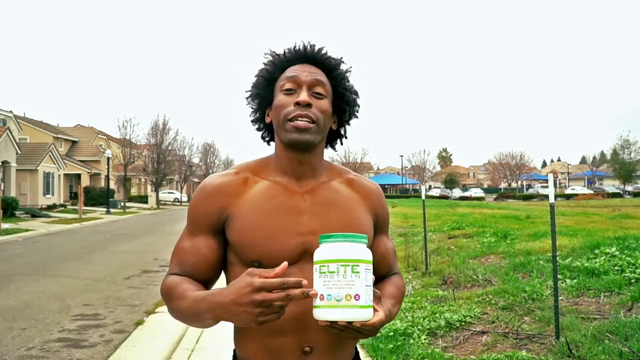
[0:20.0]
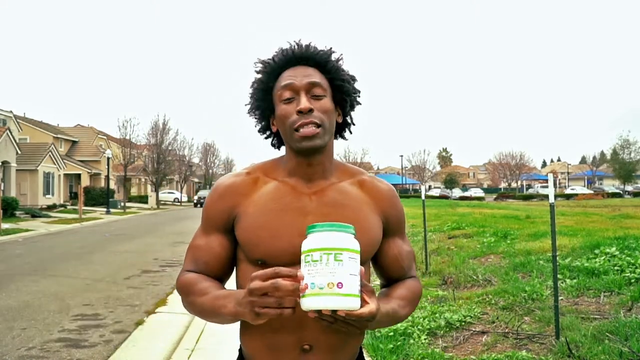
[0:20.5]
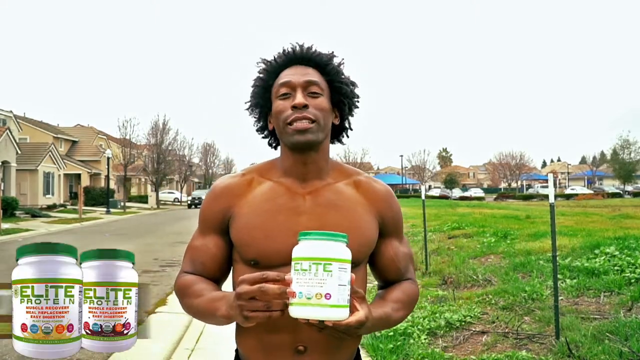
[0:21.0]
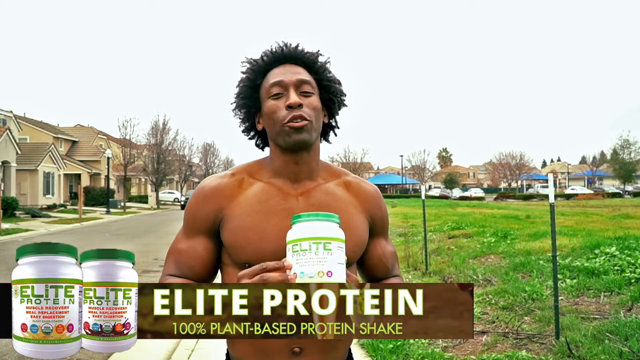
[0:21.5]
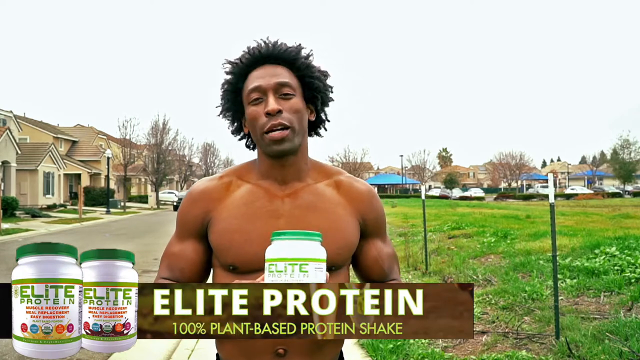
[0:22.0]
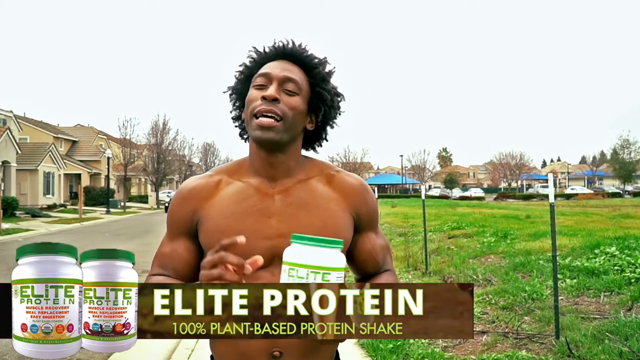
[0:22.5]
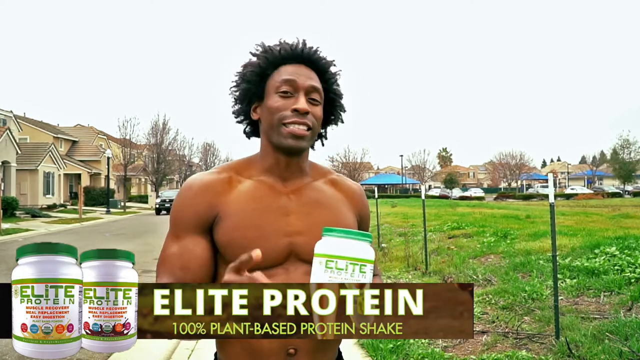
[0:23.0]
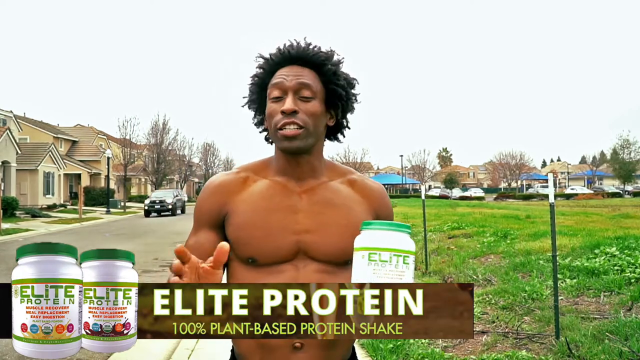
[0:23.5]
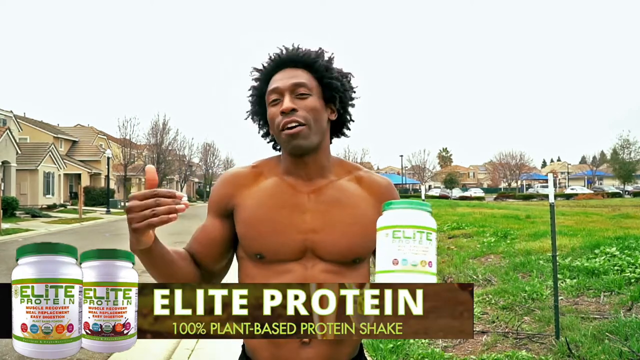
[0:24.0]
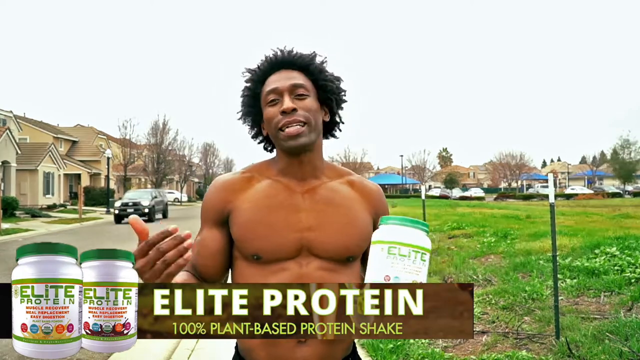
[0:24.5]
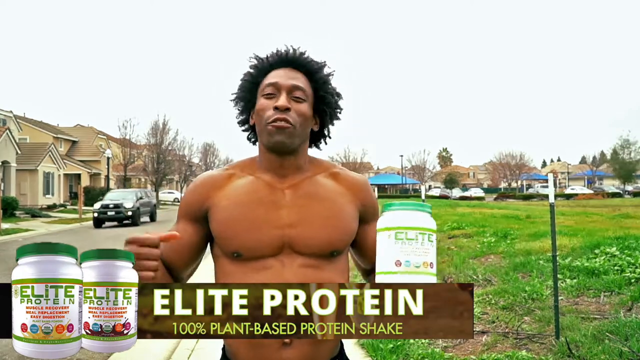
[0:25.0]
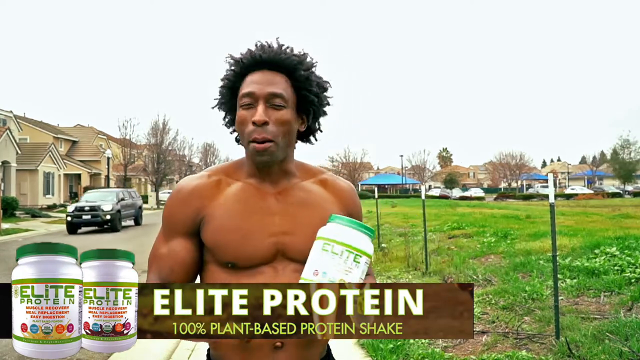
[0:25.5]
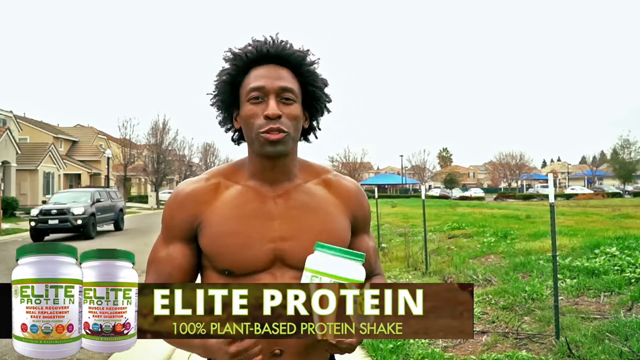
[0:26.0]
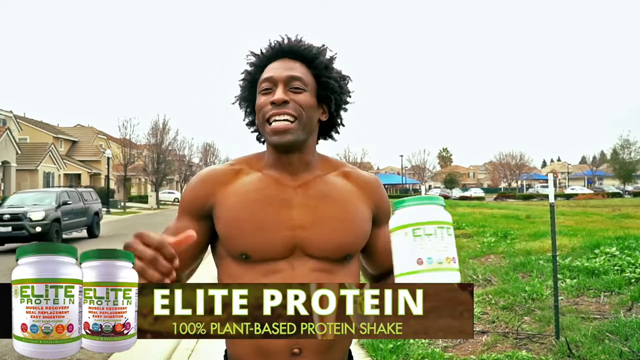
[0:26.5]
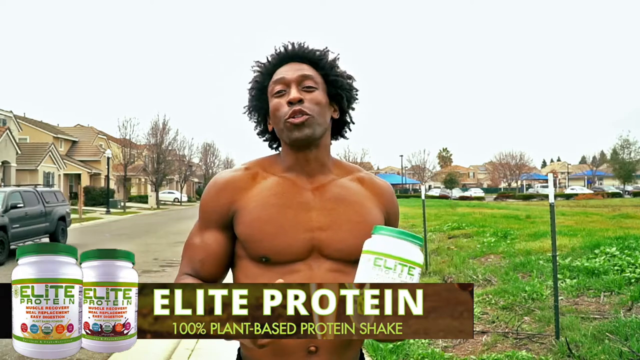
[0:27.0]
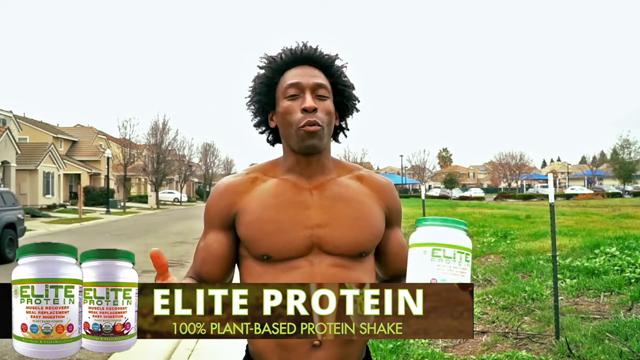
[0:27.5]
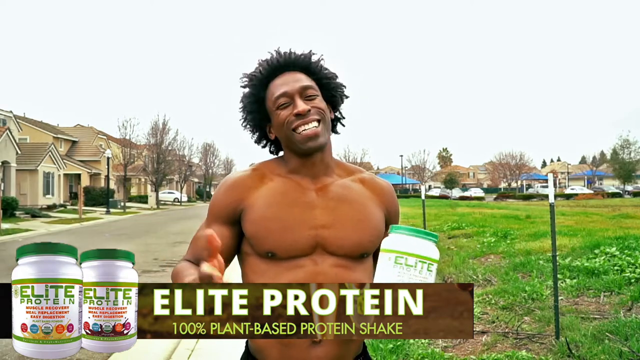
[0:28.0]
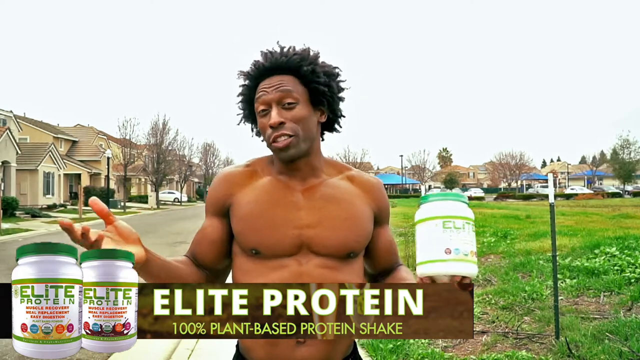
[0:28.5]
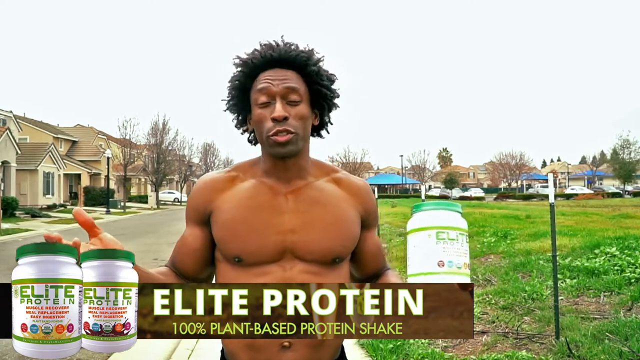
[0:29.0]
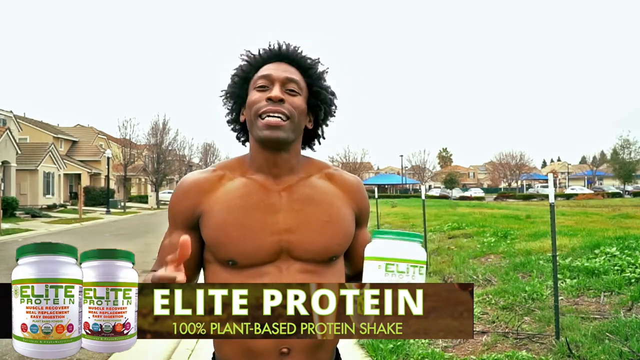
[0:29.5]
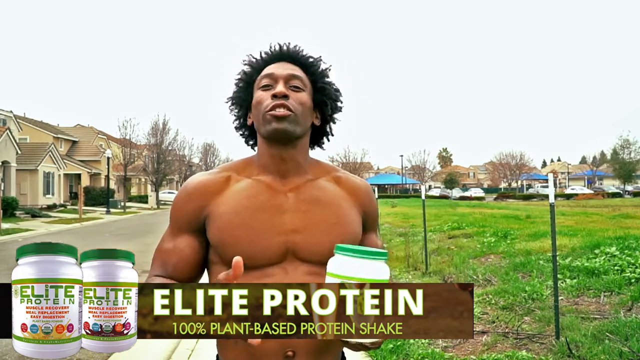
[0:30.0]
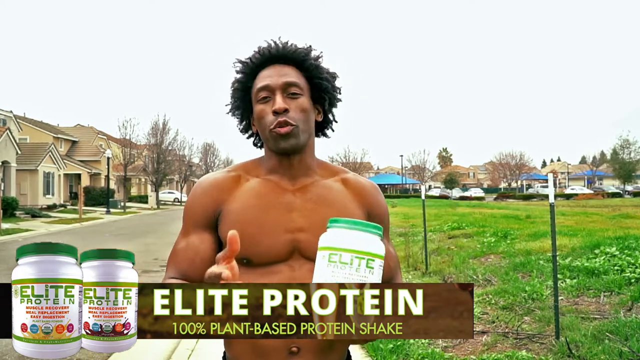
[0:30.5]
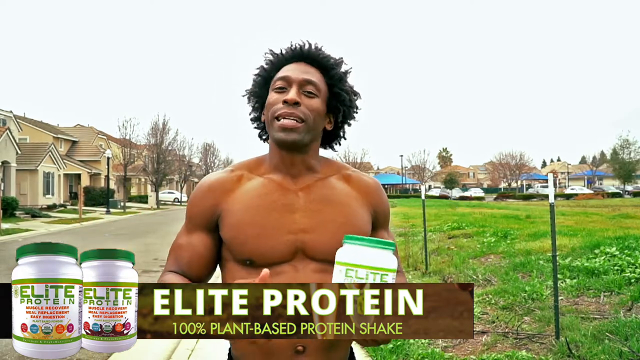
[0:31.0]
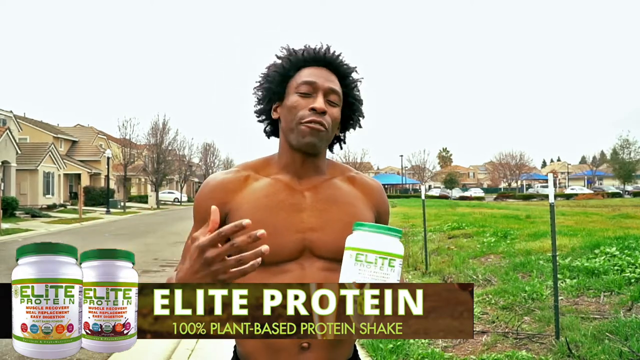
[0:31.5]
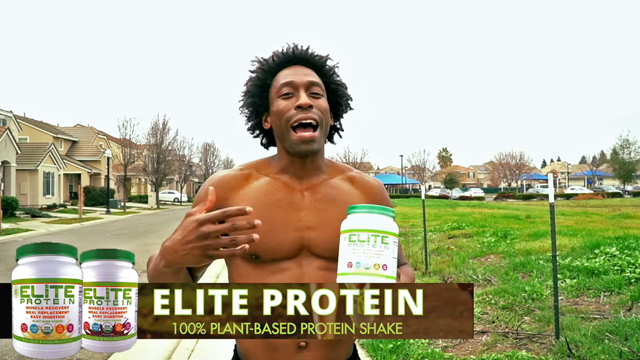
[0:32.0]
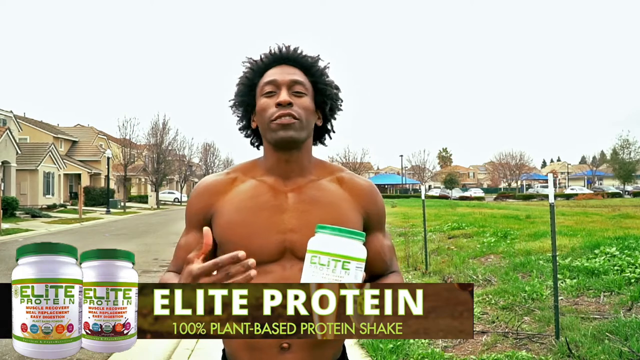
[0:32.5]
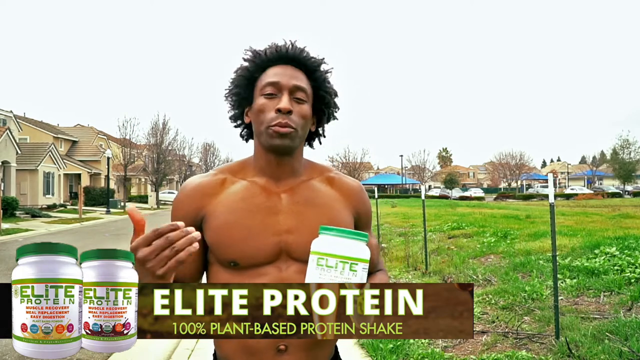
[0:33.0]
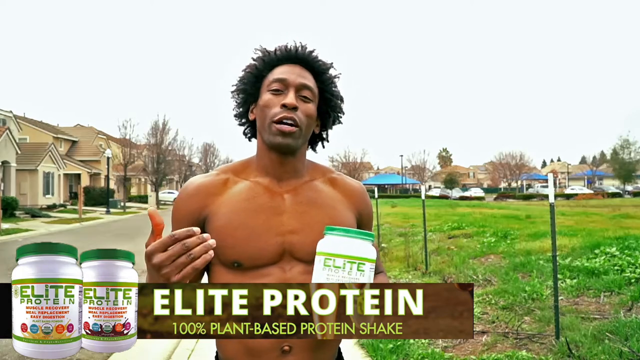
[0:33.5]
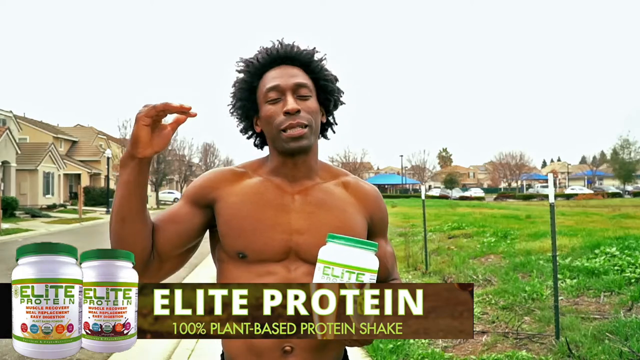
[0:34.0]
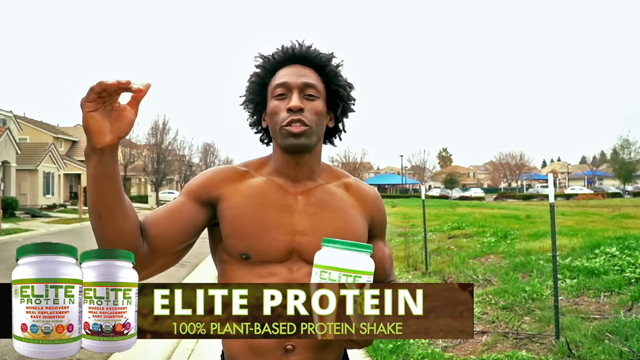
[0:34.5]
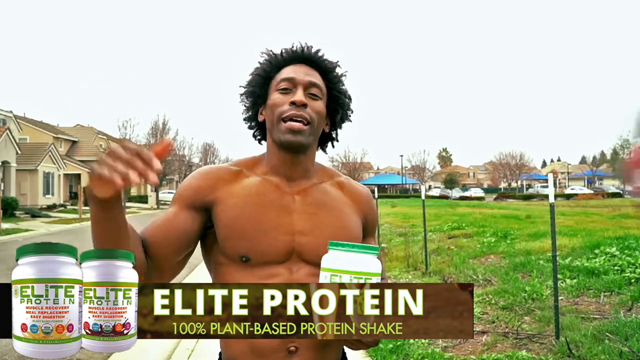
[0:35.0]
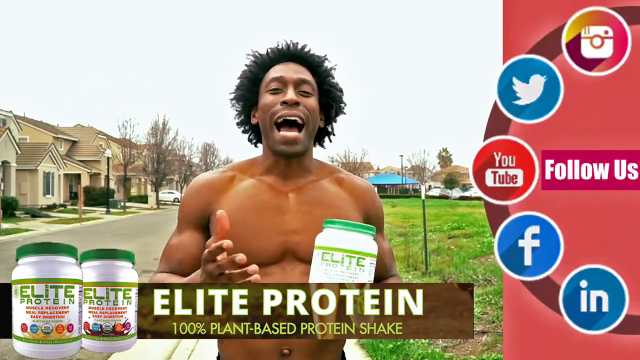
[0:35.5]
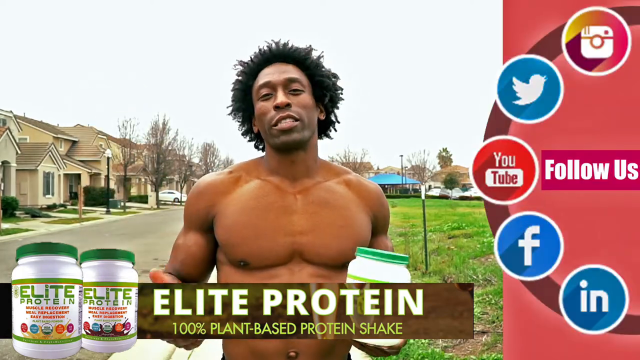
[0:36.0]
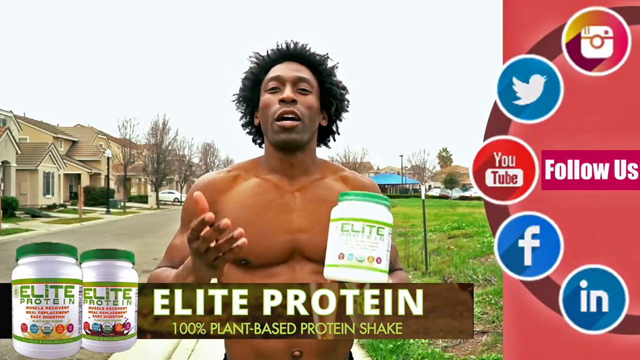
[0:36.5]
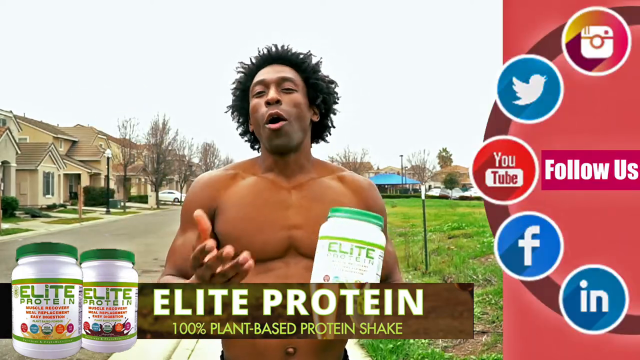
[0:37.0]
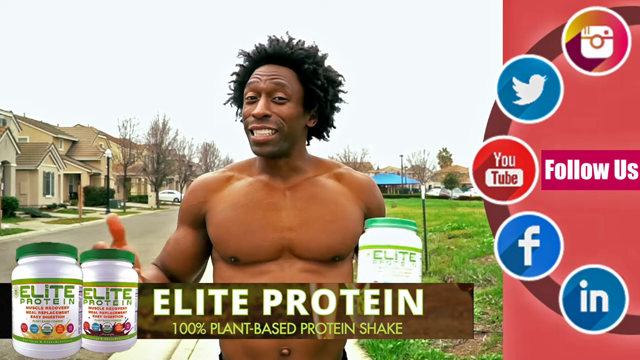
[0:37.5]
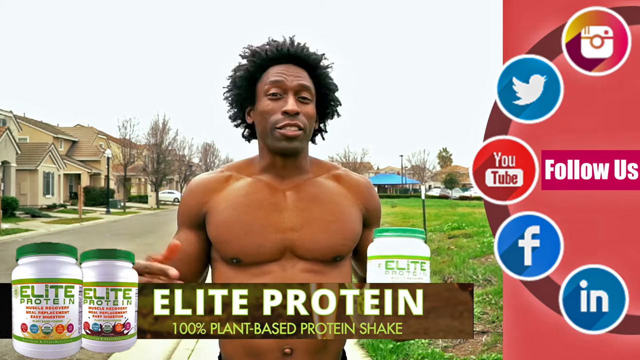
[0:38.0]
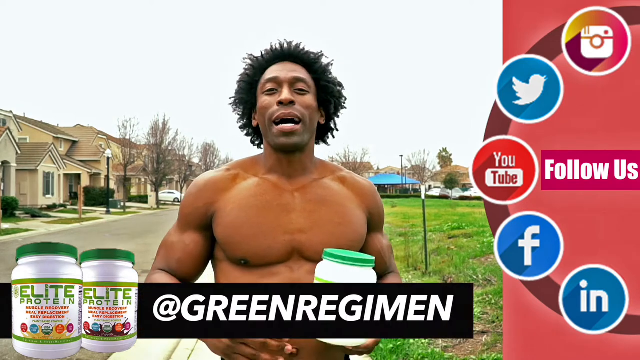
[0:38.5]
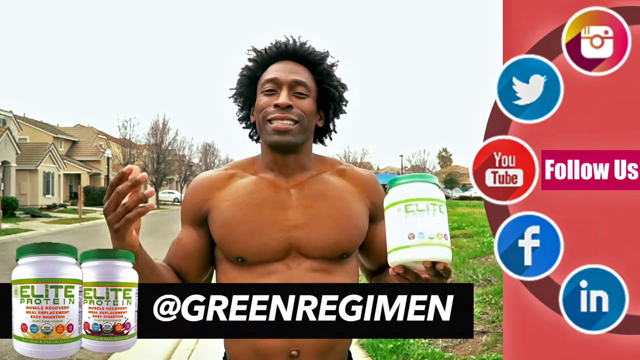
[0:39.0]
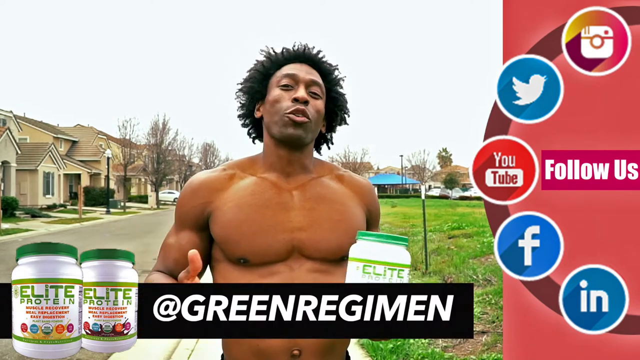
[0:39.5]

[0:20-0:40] The man very enthusiastically appears to describe what is in the product as a banner pops up on the left-hand side that says "Elite Protein 100% plant-based protein shake." He gestures with his right hand, holding up his index finger as if in sort of a confirmation, and appears to be trying to explain the product and promote its benefits as he gestures toward the camera. It is an overcast day, and a row of trees with sort of sparse leaves is on the left-hand side in front of the houses. In the background there appears to be a line of maybe seven or eight cars. He continues to point to the jar and shakes it a little. A Toyota Tacoma slowly passes him on his right side, camera left.